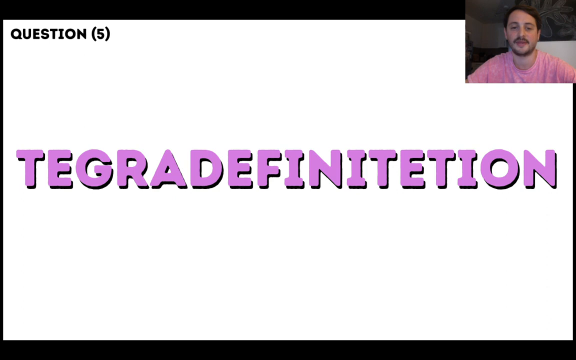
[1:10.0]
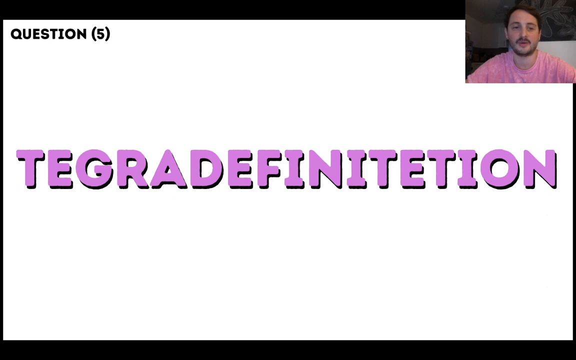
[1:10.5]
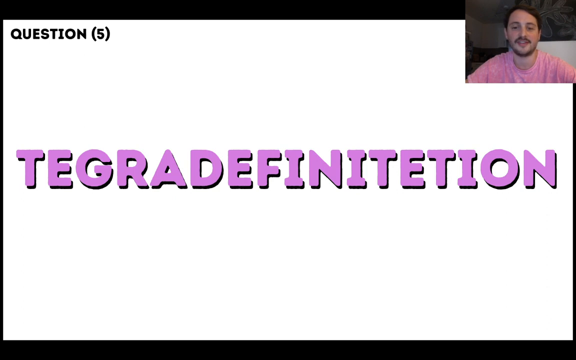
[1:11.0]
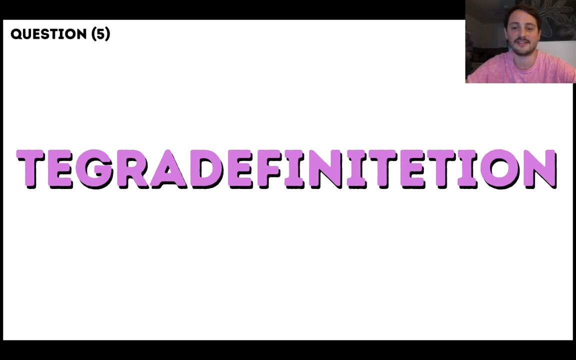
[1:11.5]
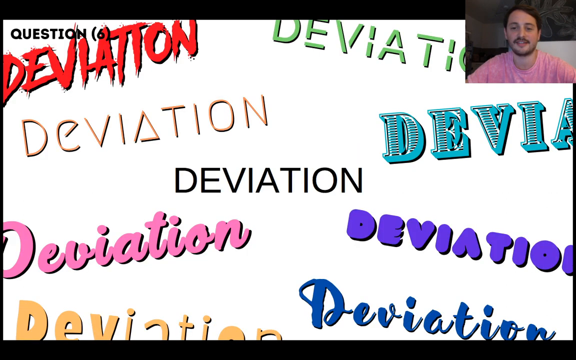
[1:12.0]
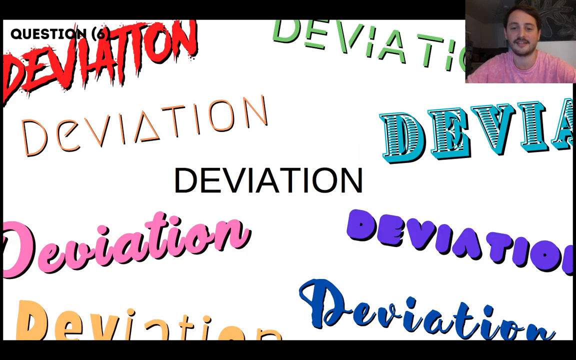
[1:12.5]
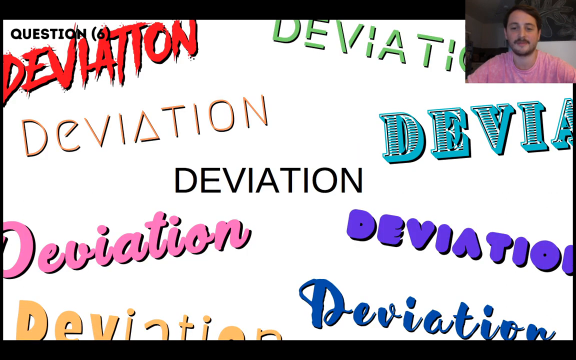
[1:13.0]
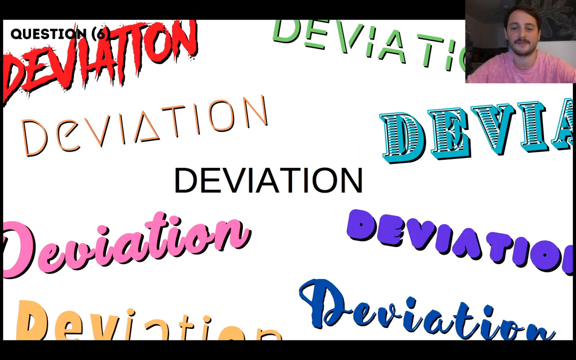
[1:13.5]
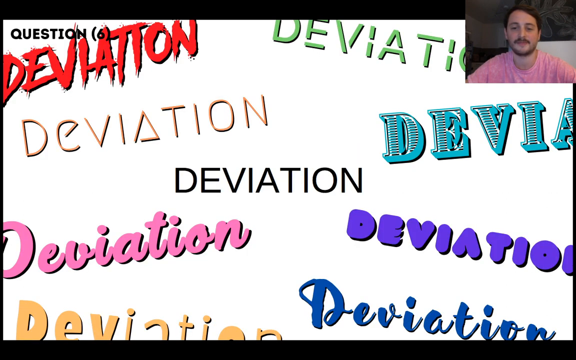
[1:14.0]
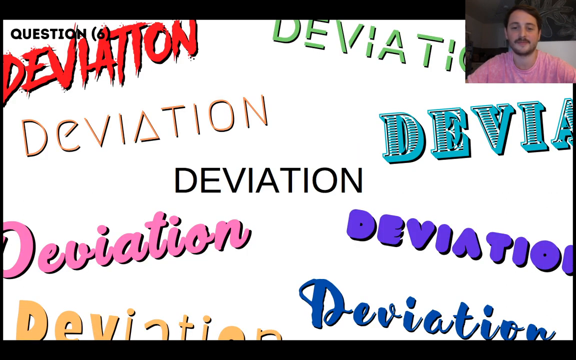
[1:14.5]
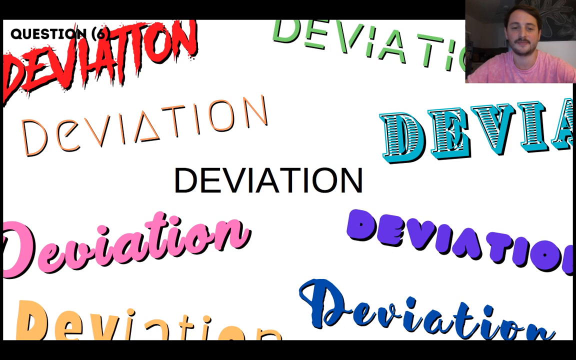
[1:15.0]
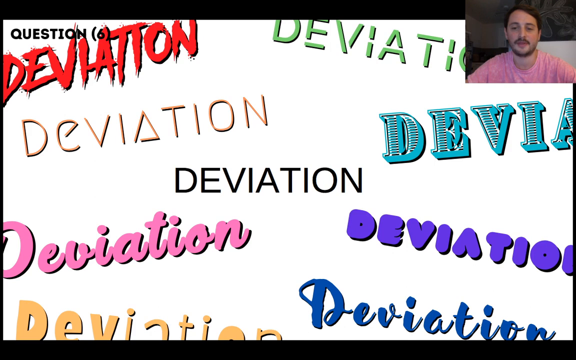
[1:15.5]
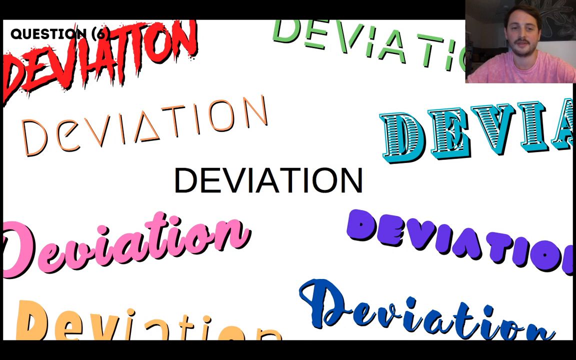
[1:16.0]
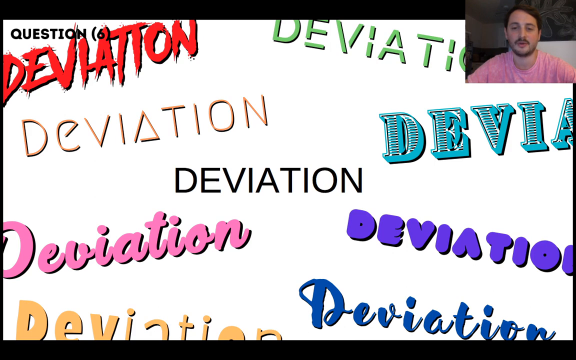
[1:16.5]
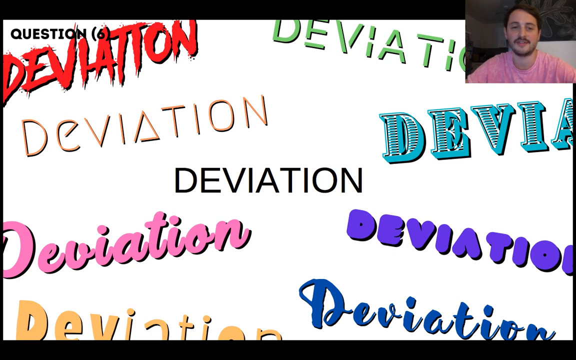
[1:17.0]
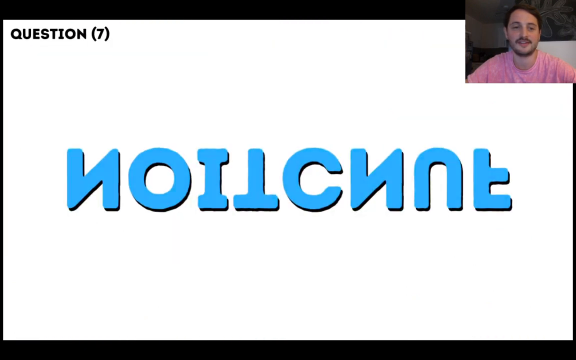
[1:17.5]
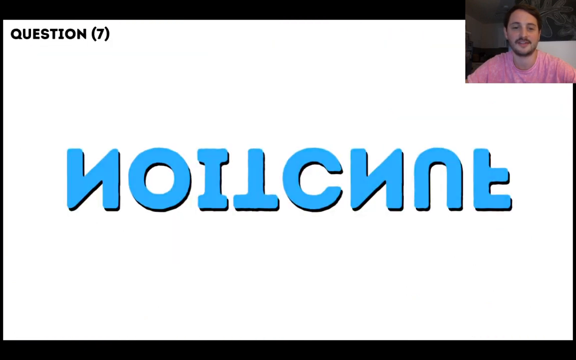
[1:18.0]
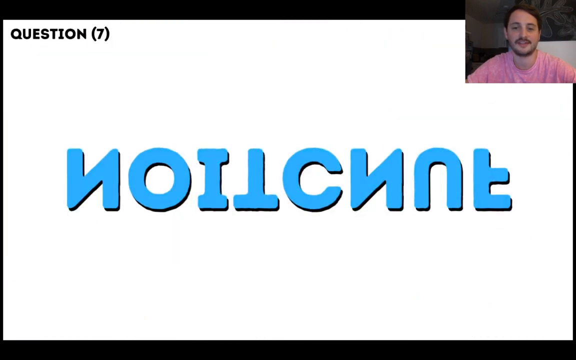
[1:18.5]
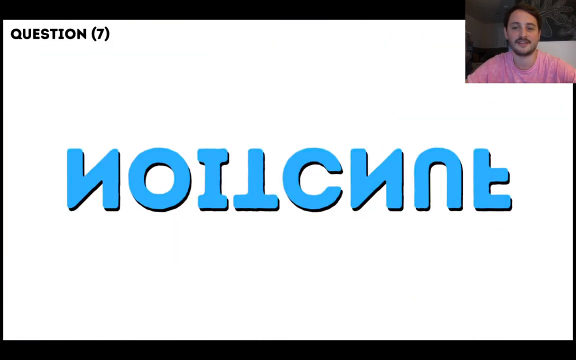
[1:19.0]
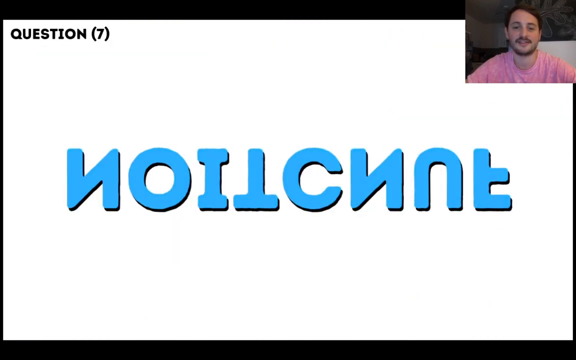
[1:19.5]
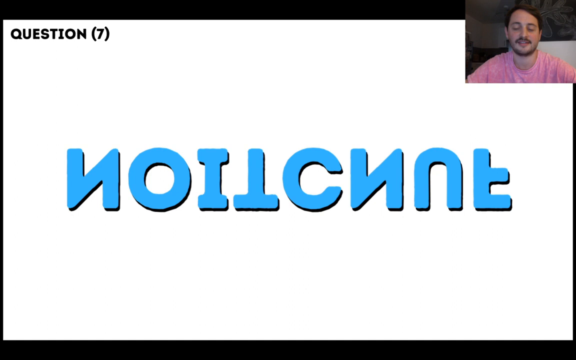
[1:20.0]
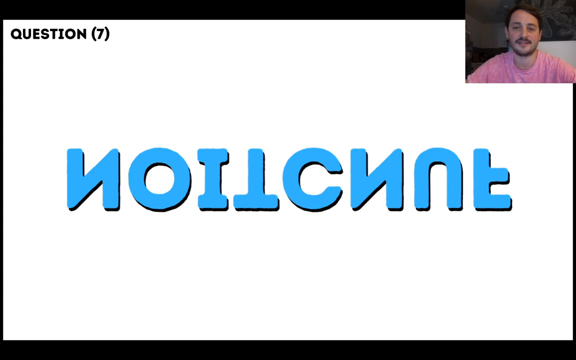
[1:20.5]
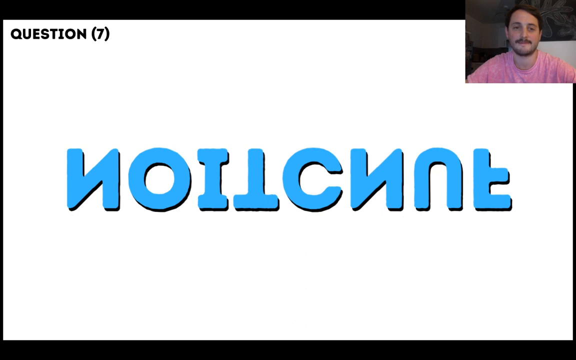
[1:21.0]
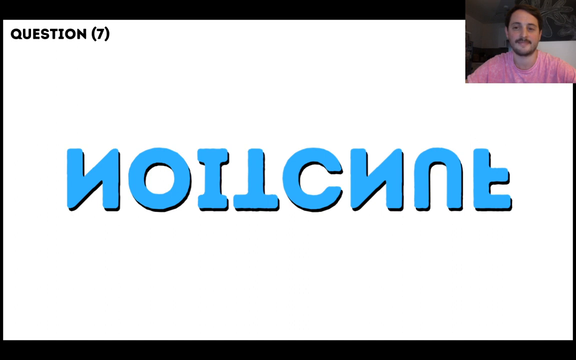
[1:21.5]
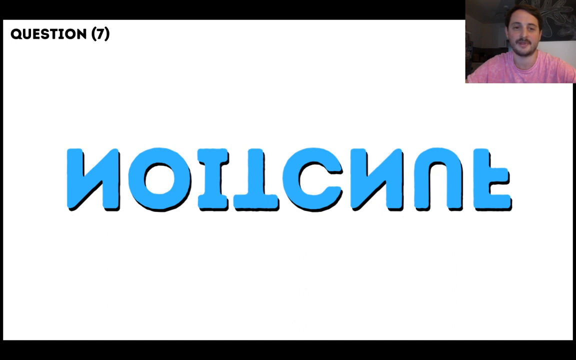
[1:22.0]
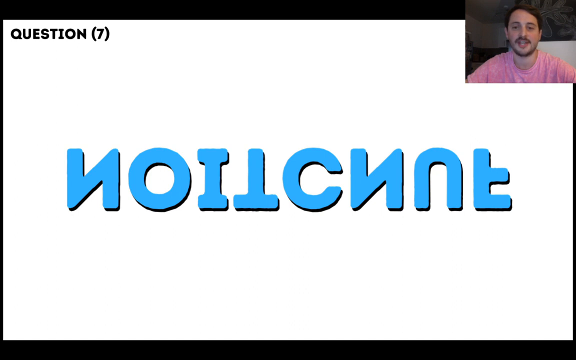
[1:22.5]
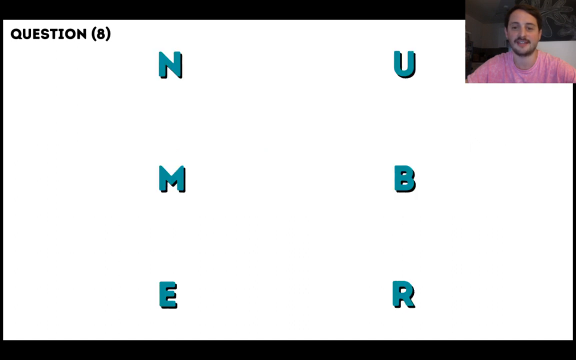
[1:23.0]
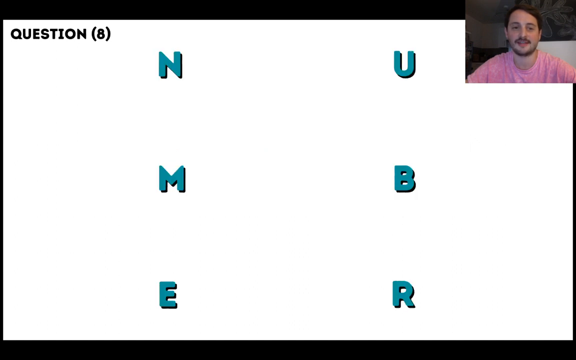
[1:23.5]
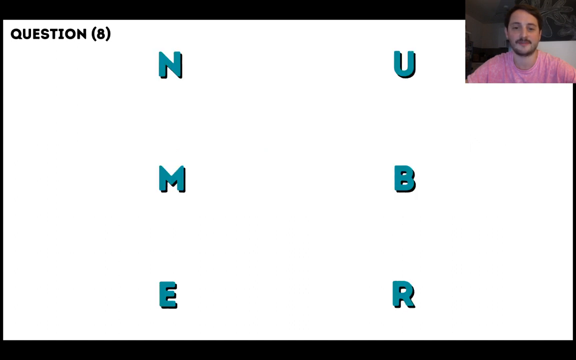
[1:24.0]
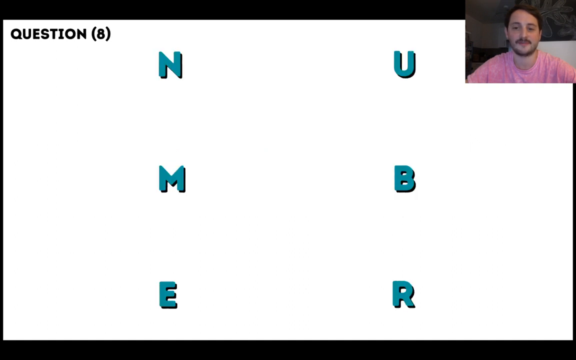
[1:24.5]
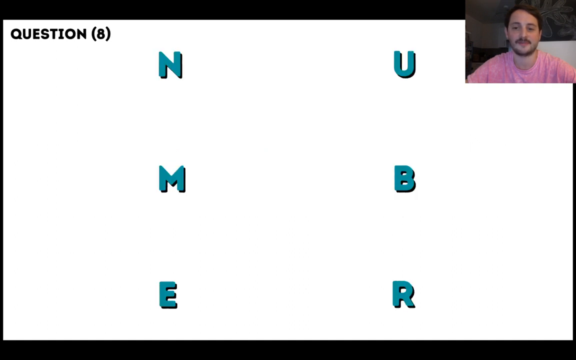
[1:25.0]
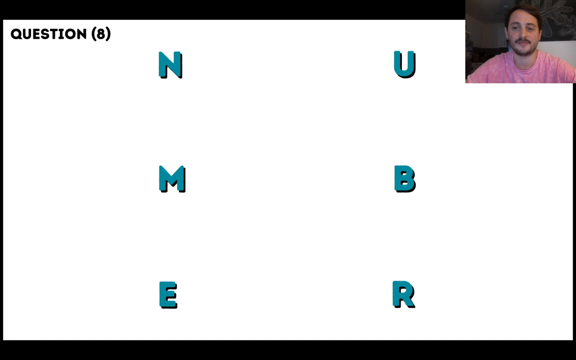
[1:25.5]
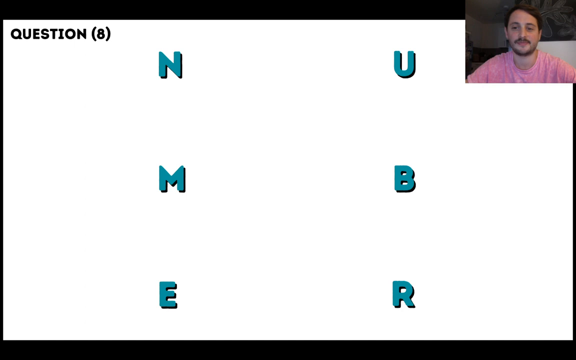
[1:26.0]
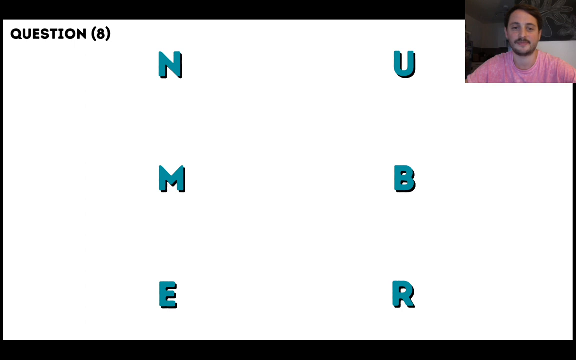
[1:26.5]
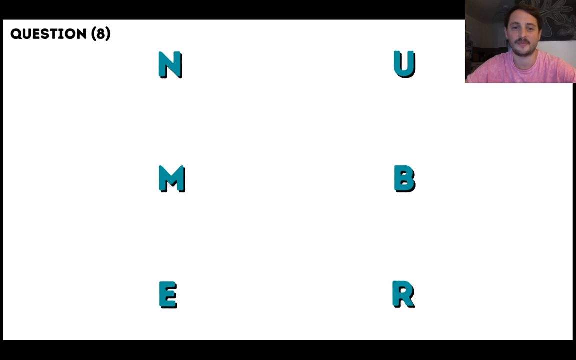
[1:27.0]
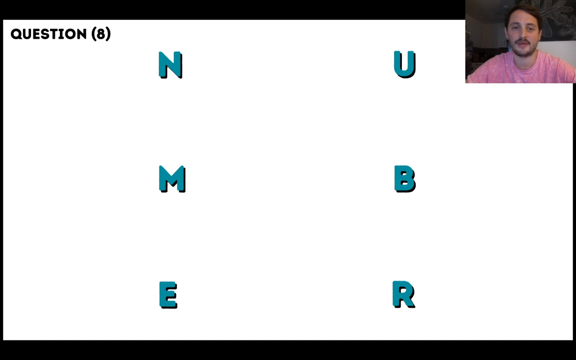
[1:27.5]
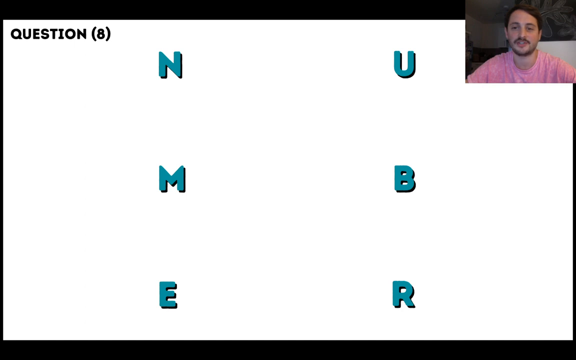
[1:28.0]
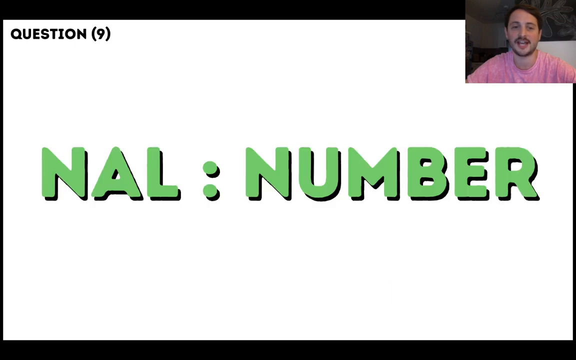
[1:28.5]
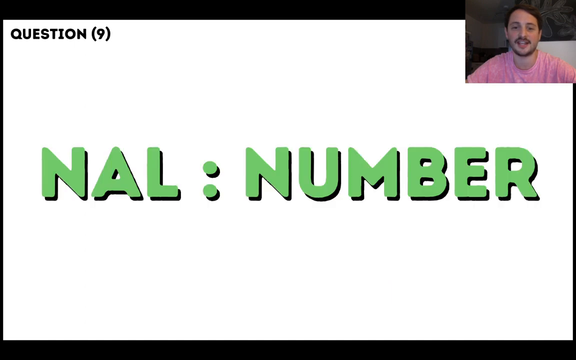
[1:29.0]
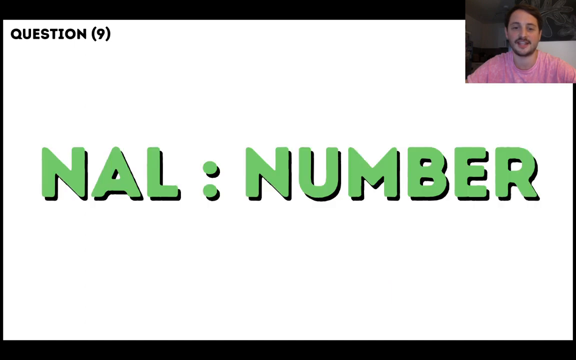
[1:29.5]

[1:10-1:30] The same man in the pink shirt, with beard and mustache, speaks in the top right while moving through the questions more quickly. The top left reads "Question (5)", and the number in parentheses changes through six, seven, eight and nine as he moves on. Question five shows the letters T-E-G-R-A-D-E-F-I-N-I-T-E-T-I-O-N in a light purple font with the black 3D backing. Question six shows "DEVIATION" about nine times, staggered across the screen in multiple fonts, with only about two to three showing the entire word and the rest cut off. The fonts include a horror-style red font with splatters, a green font with broken-up letters, a plain black font in the middle, a 3D light blue font, a pink cursive font, a purple bubble font, a blue cursive font, and below that a broken-up yellow font. Question seven shows non-English text in blue. Question eight shows the letters N-U-M-B-E-R staggered, with N, M and E in a left column and U, B and R in a right column.